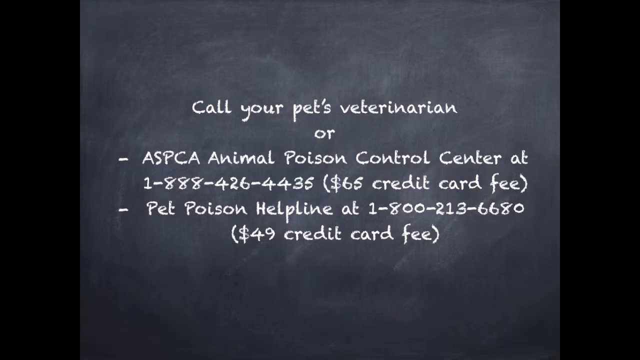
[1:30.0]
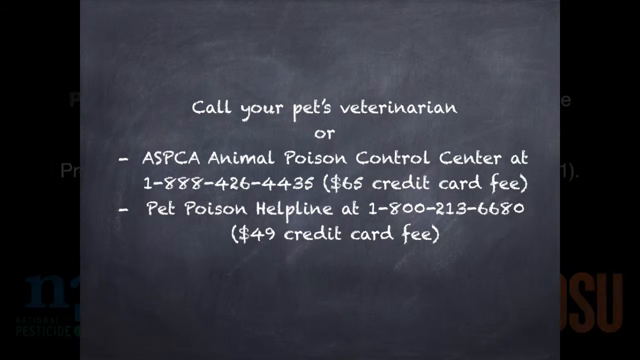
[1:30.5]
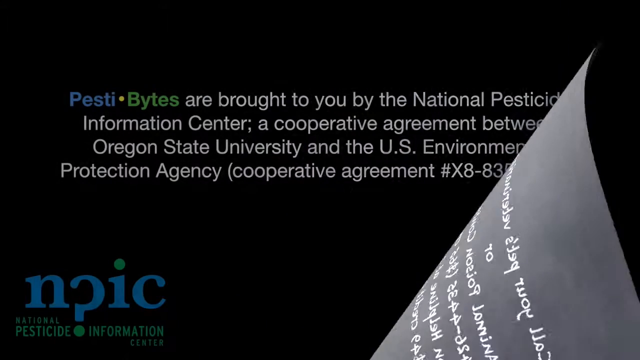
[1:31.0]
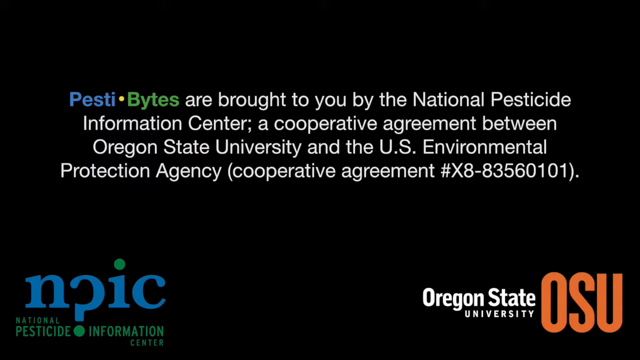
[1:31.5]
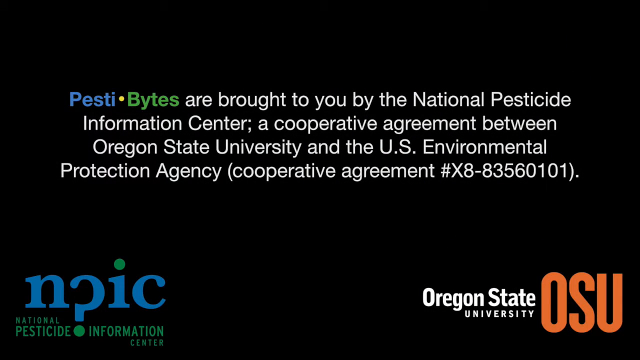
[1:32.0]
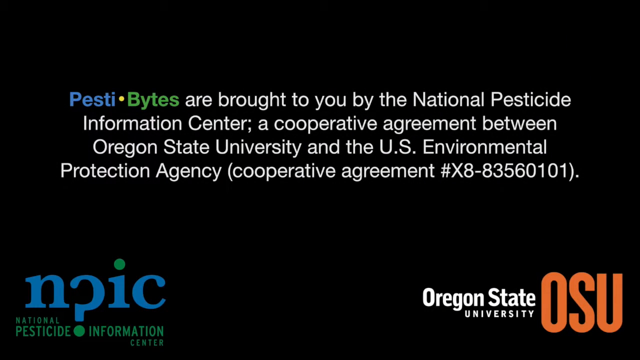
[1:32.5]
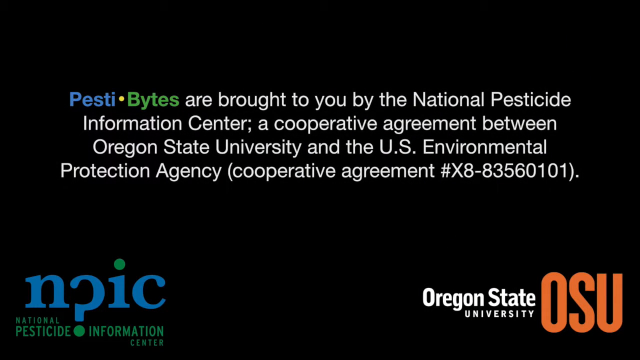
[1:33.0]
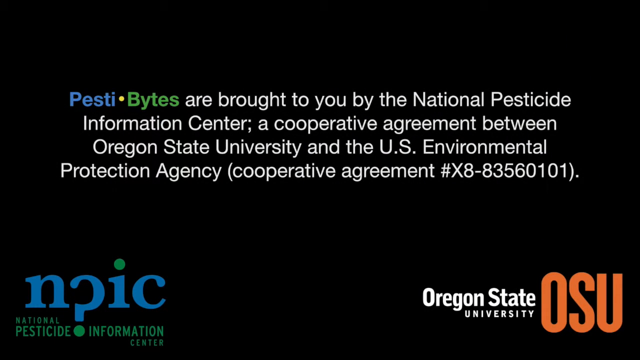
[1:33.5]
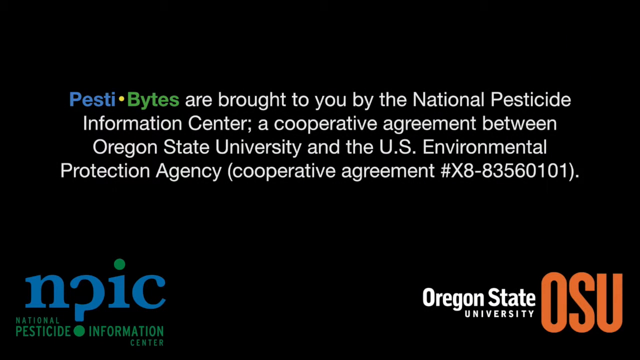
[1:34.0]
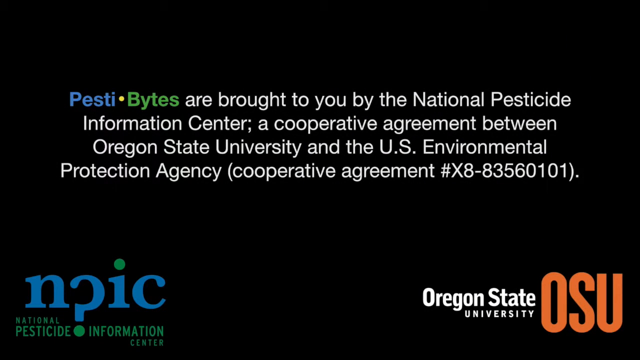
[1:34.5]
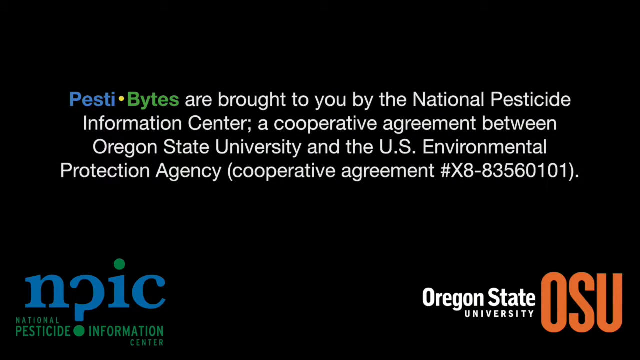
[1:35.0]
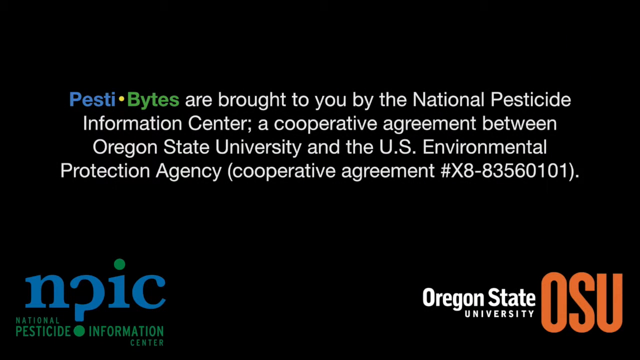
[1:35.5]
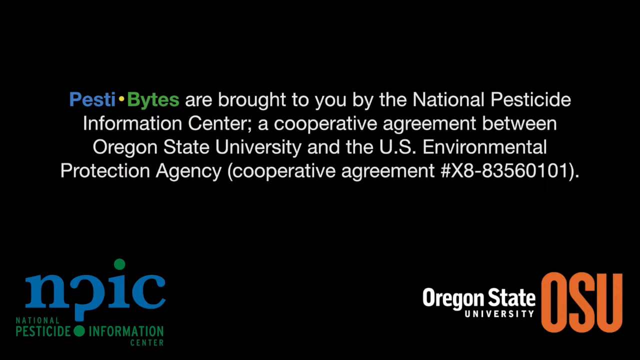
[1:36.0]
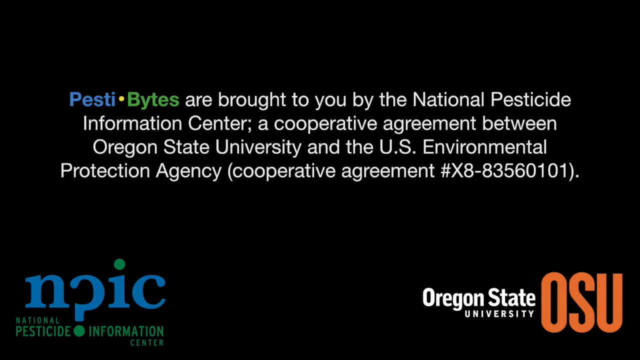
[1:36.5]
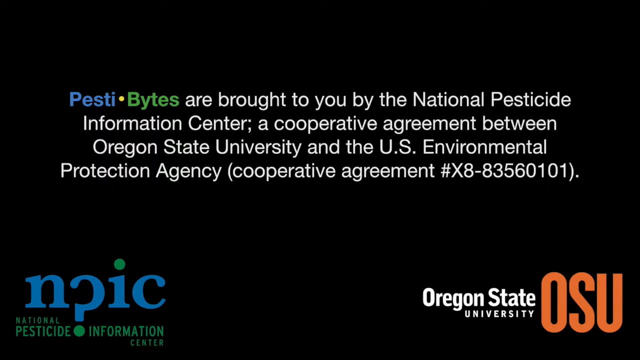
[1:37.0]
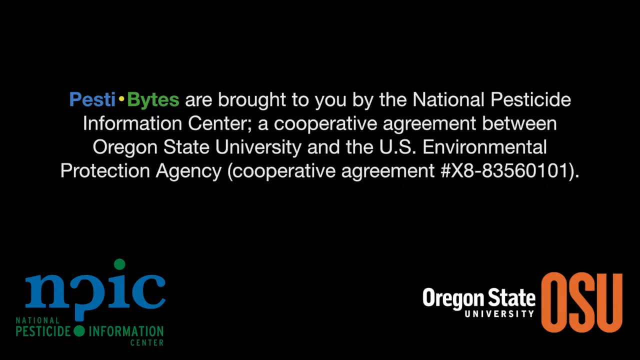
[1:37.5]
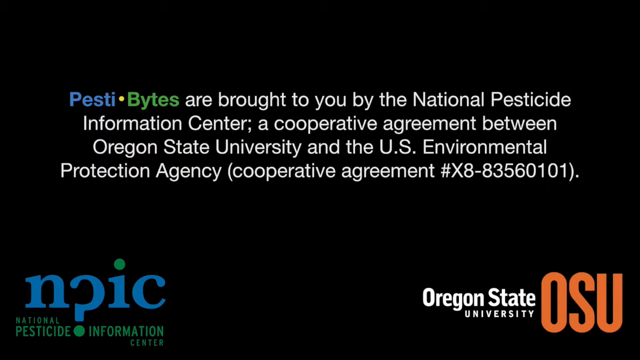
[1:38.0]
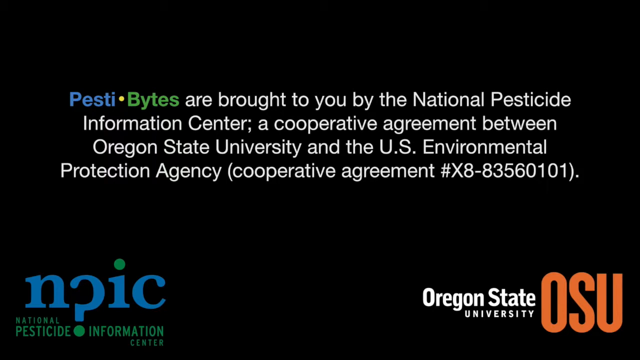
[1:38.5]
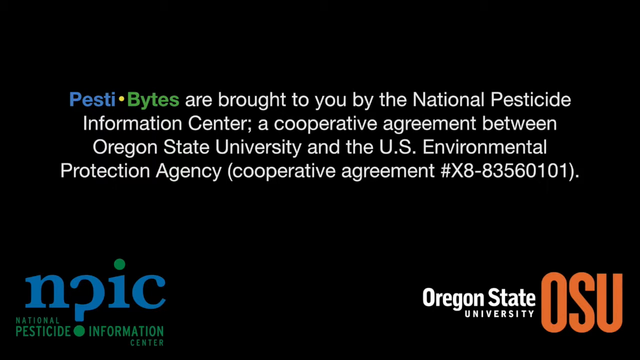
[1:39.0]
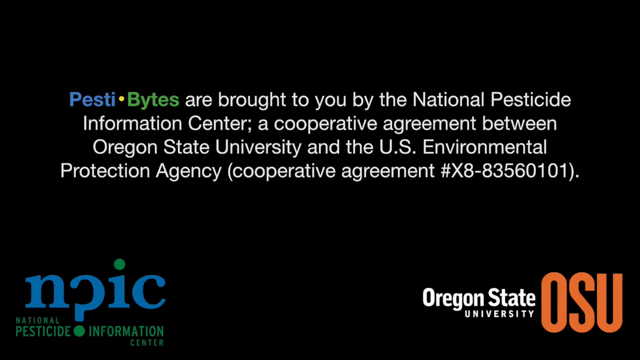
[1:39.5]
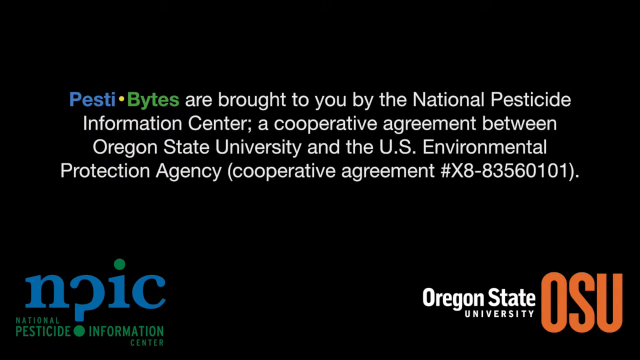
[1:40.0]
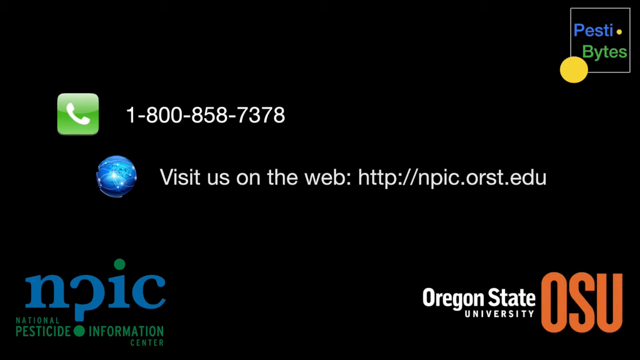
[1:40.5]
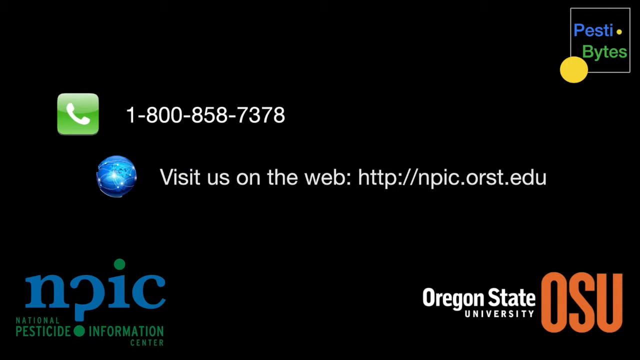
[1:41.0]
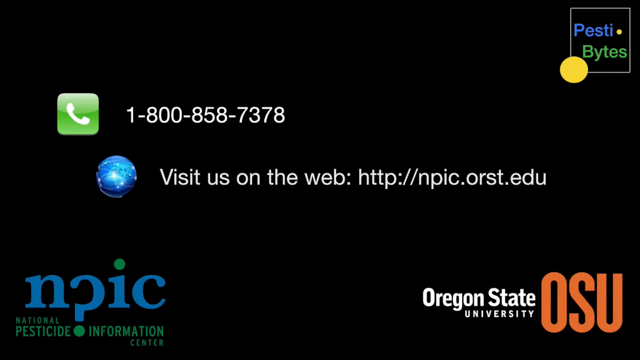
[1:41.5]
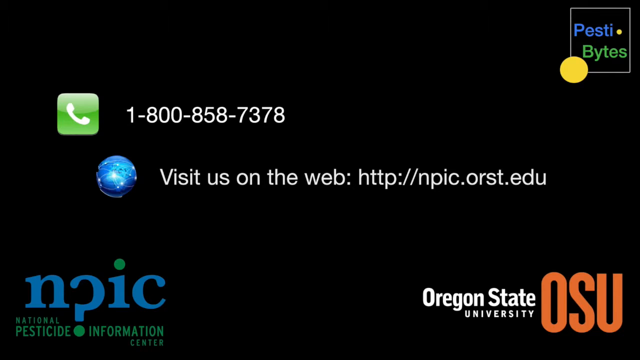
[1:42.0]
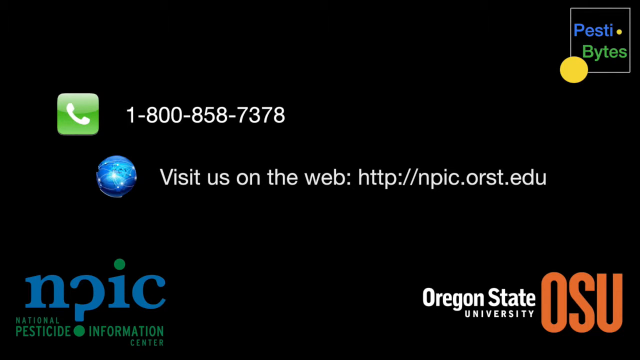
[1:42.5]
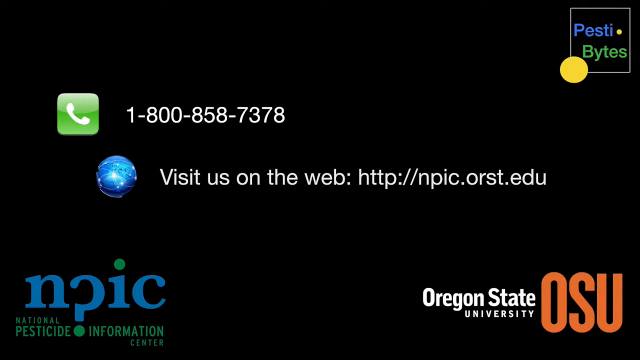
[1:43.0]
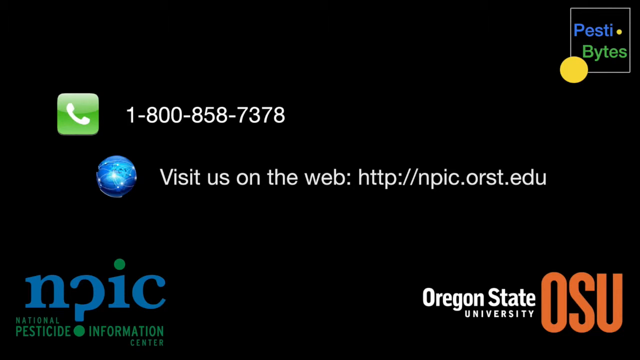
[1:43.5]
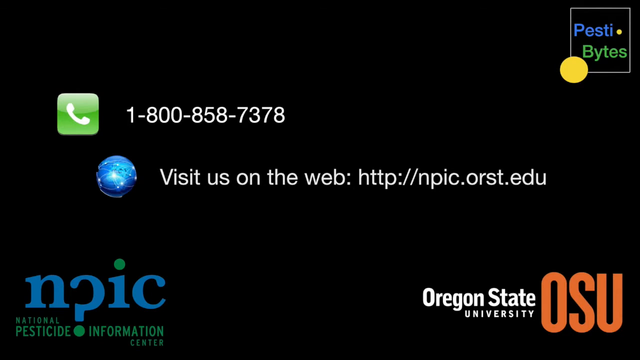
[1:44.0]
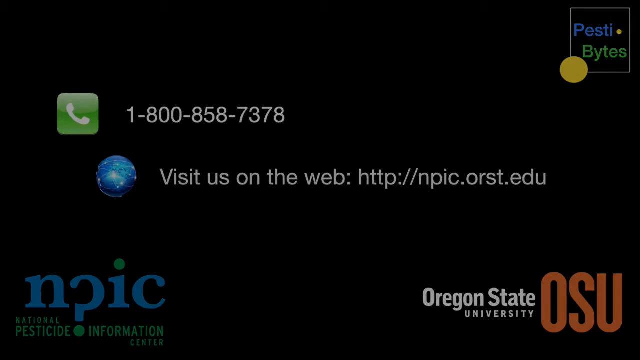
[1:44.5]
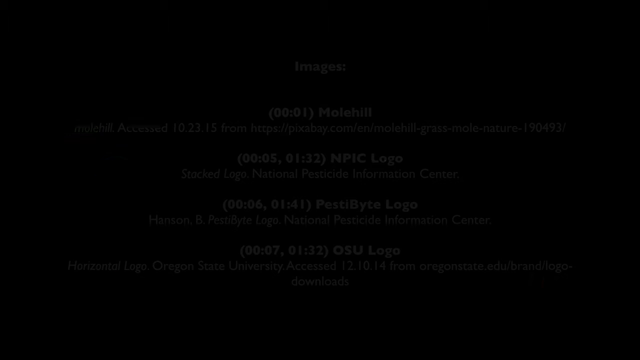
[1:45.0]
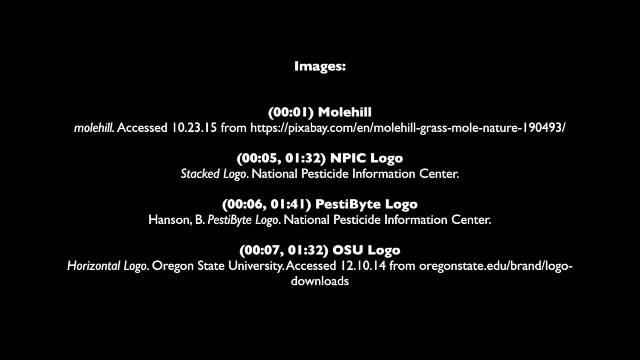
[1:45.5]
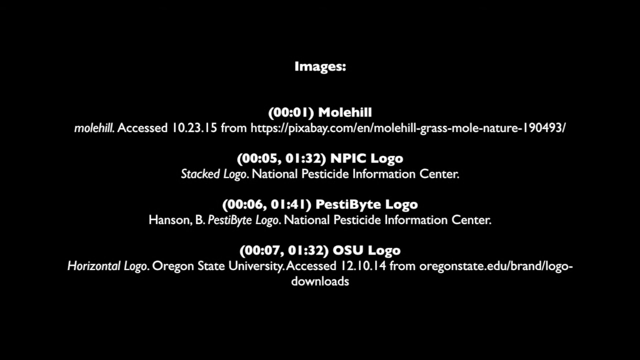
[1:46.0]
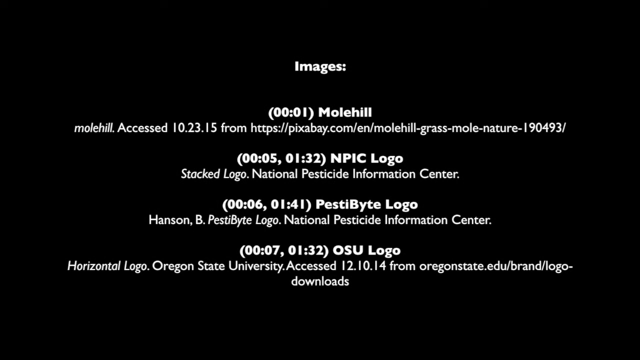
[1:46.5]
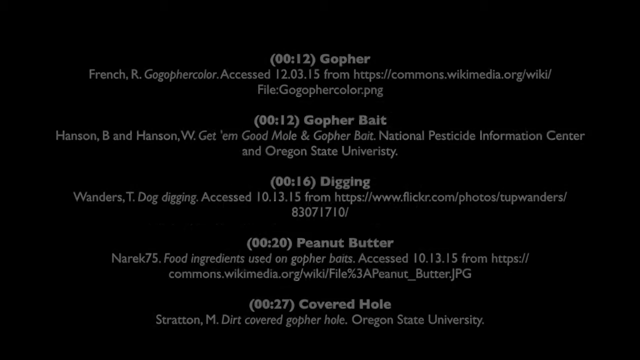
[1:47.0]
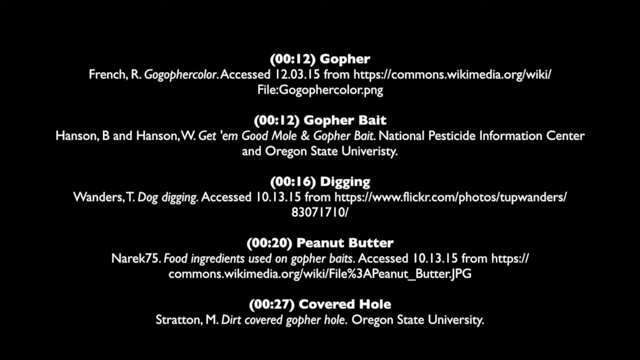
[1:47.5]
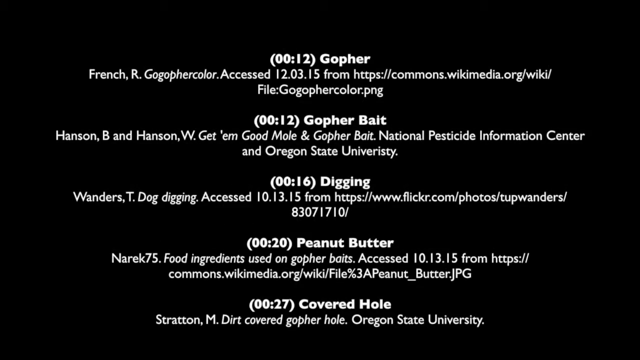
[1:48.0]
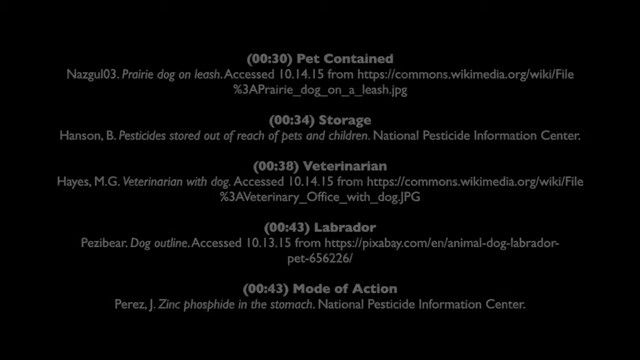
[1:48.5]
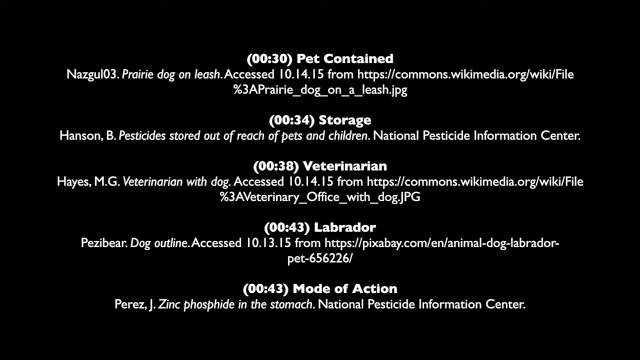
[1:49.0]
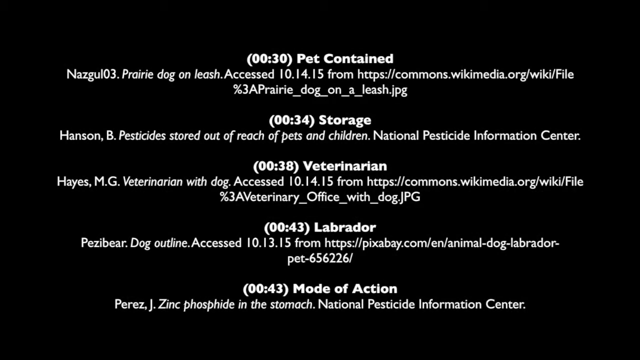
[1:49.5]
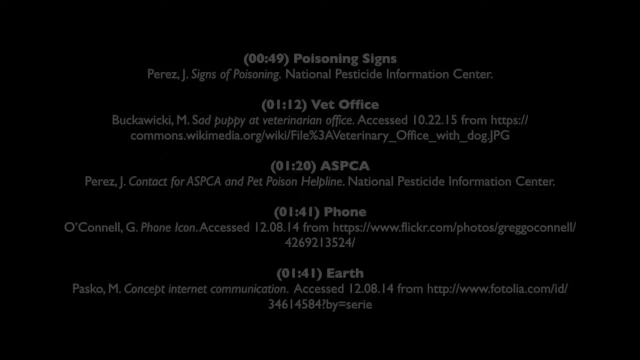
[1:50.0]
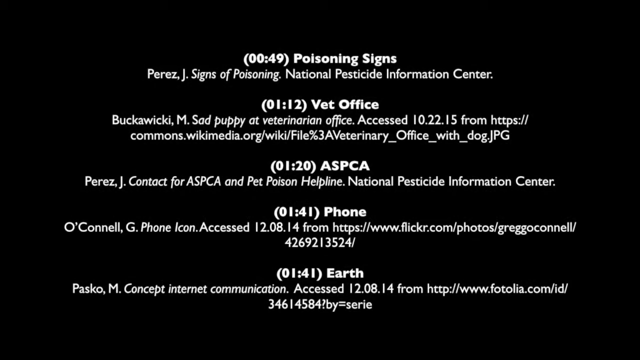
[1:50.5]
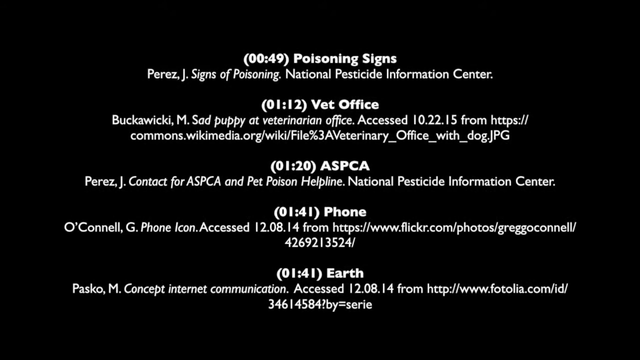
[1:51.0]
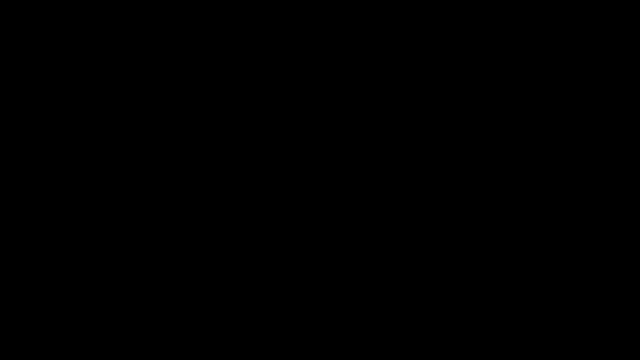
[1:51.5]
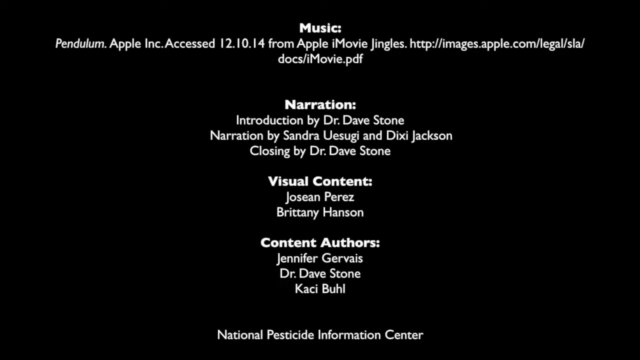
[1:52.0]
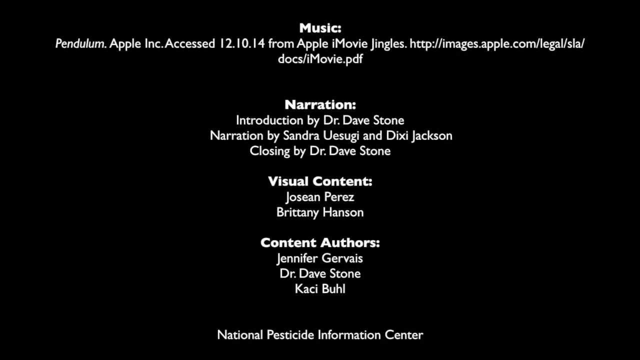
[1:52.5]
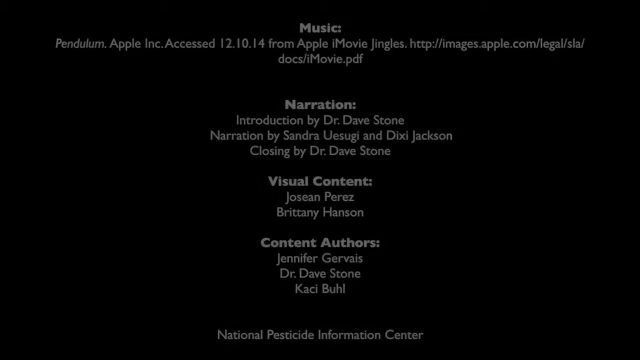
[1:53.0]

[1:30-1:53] A single slide has a black background with various white smudges made to look like a chalkboard. Text on it reads "Call your pet's veterinarian or ASPCA Animal Poison Control Center at 1-888-426-4435, $65 credit card fee. Pet Poison Helpline at 1-800-213-6680, $49 credit card fee." The slide transitions to a different slide with a black background and text reading "Pestibites are brought to you by the National Pesticide Information Center, a cooperative agreement between Oregon State University and the U.S. Environmental Protection Agency, Cooperative Agreement X8-83560101." There are logos in the bottom left and bottom right corners: the bottom left reads "NPIC, National Pesticide Information Center," and the bottom right reads "Oregon State University, OSU." A final slide in white text on a black background gives credits, with the URL and Creative Commons information for the photos and images used in the video.